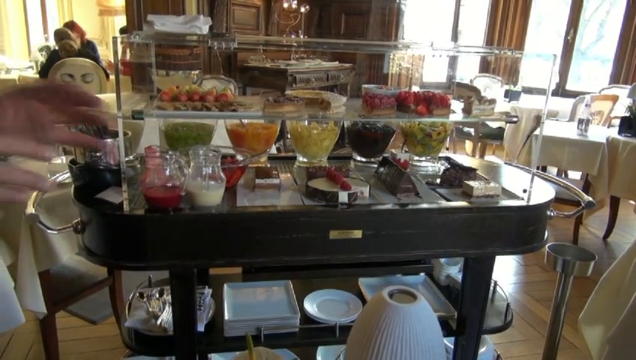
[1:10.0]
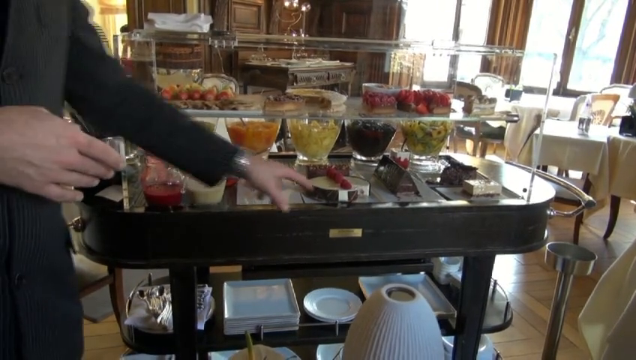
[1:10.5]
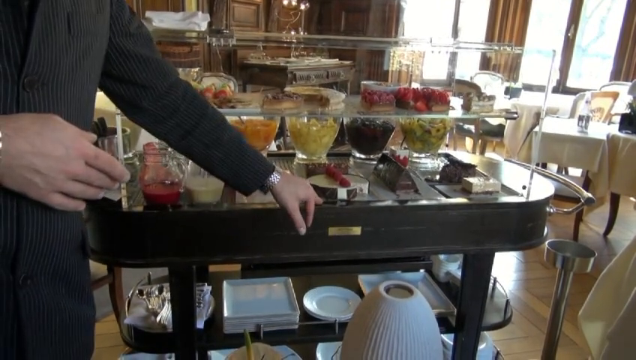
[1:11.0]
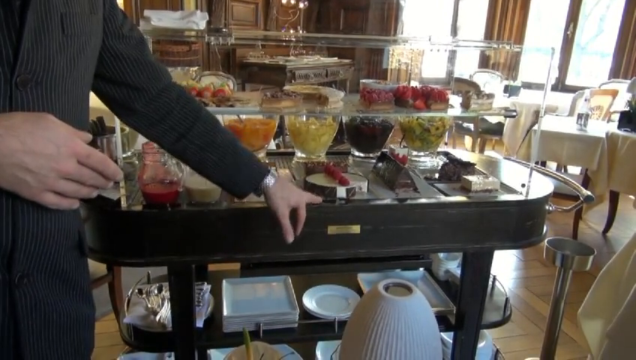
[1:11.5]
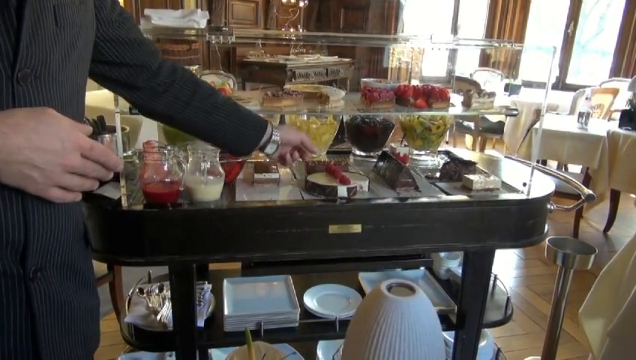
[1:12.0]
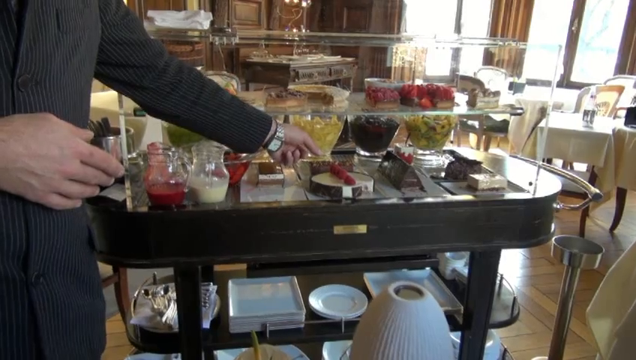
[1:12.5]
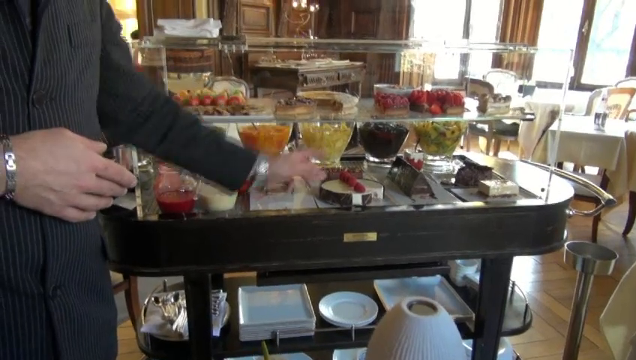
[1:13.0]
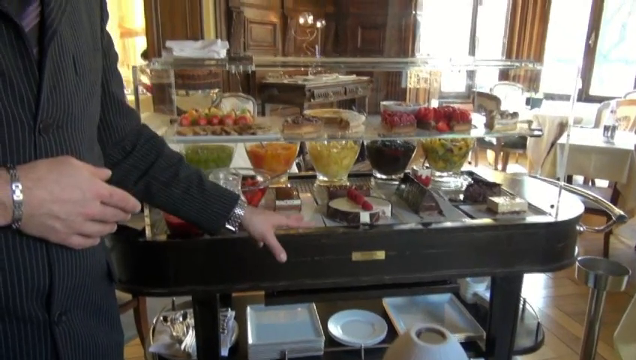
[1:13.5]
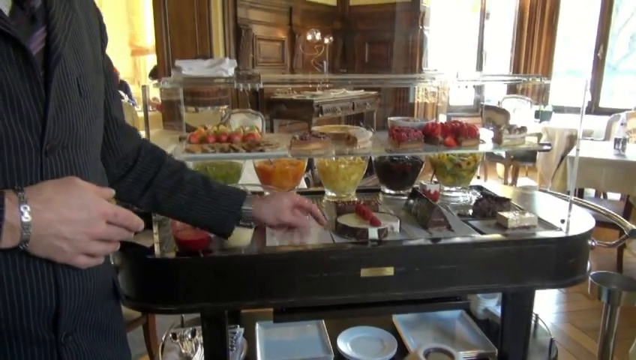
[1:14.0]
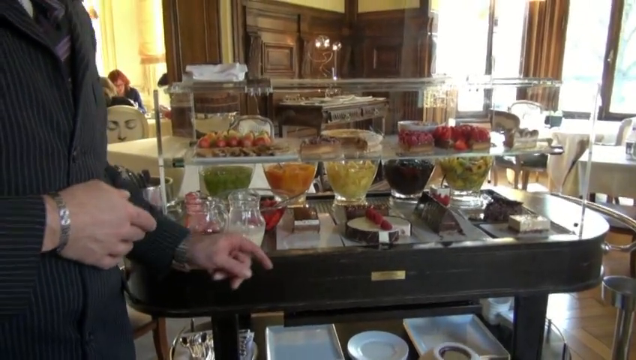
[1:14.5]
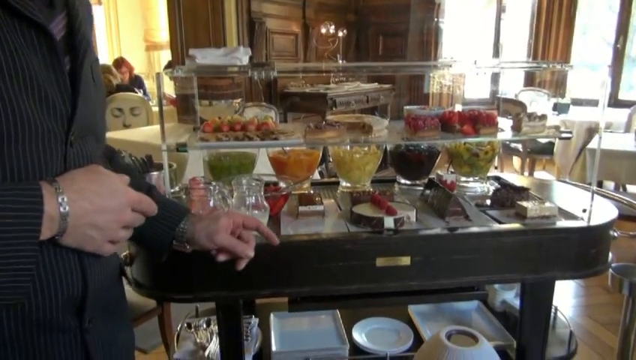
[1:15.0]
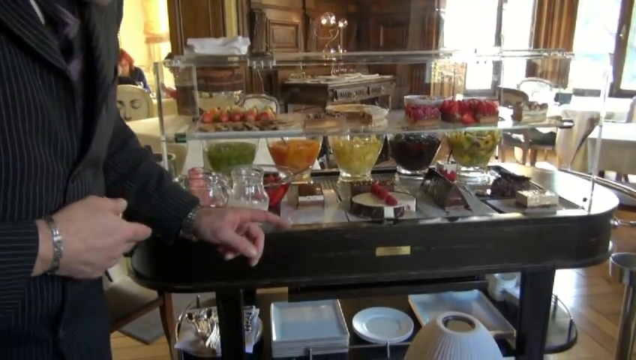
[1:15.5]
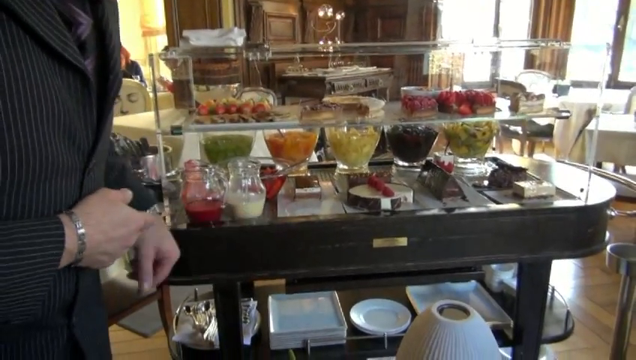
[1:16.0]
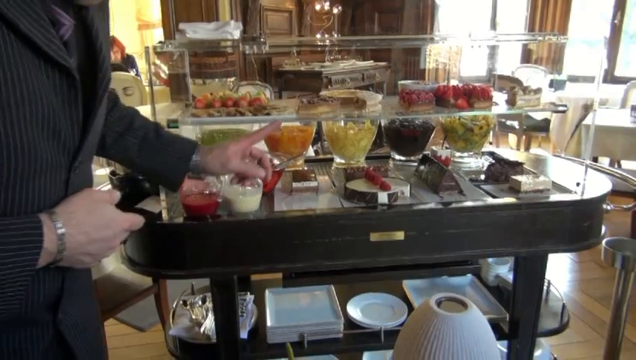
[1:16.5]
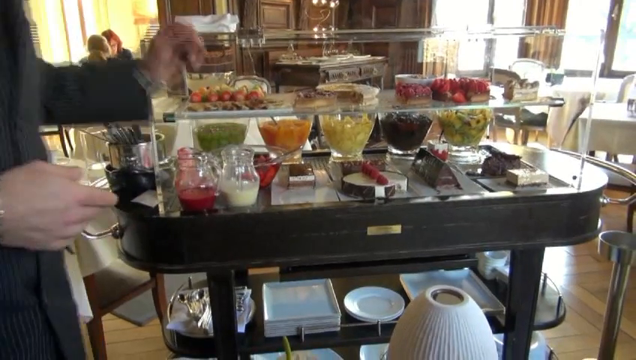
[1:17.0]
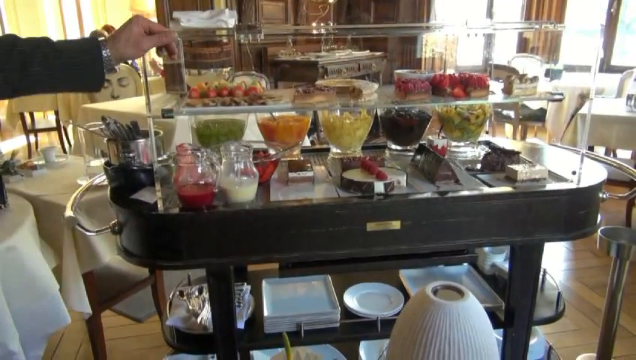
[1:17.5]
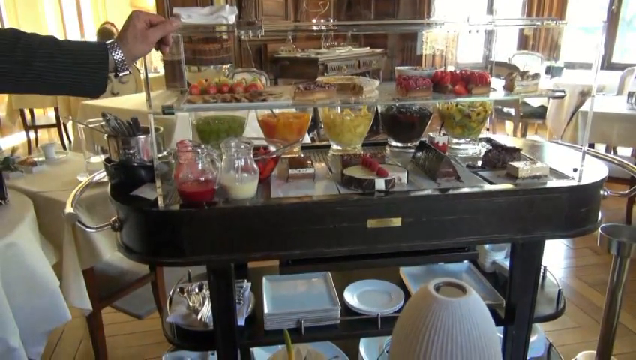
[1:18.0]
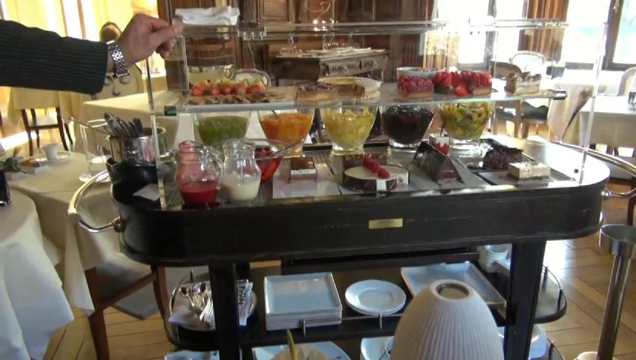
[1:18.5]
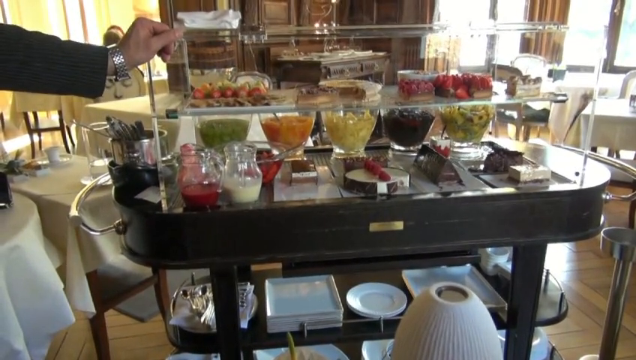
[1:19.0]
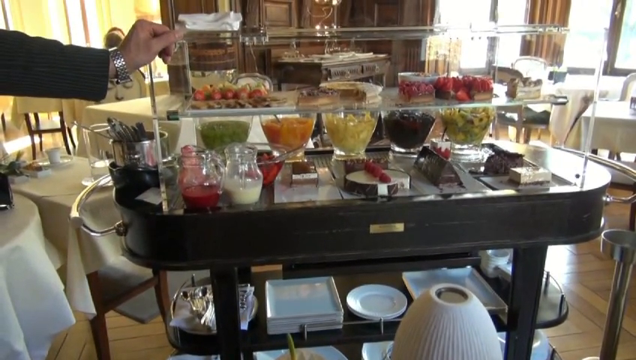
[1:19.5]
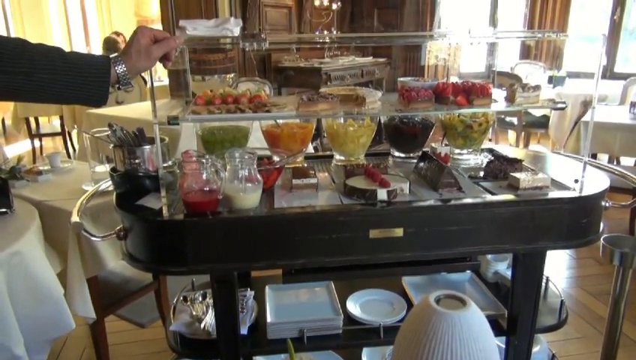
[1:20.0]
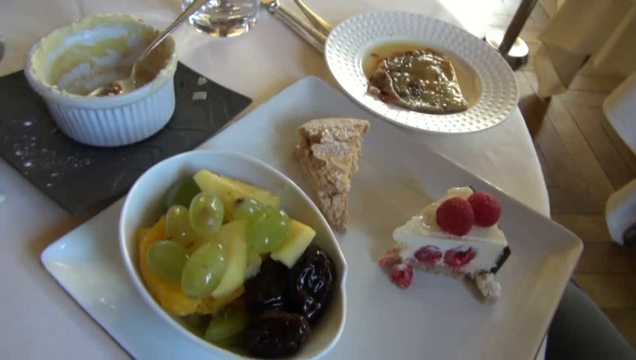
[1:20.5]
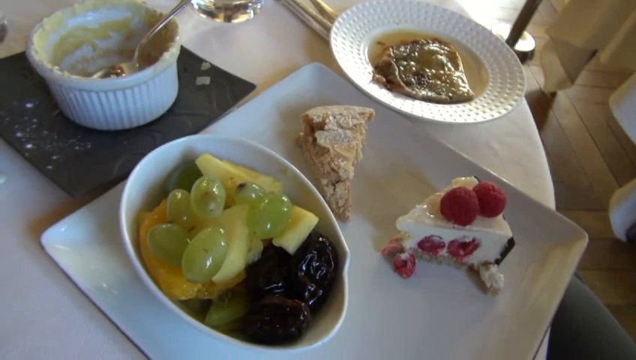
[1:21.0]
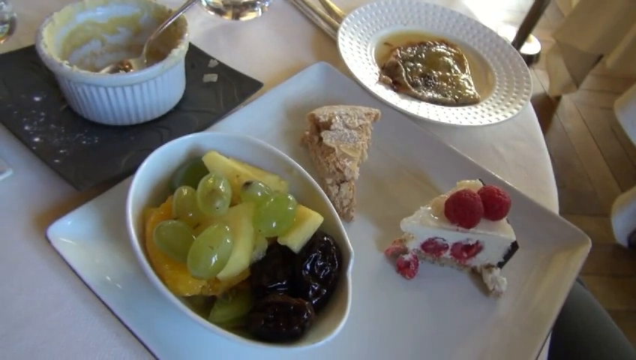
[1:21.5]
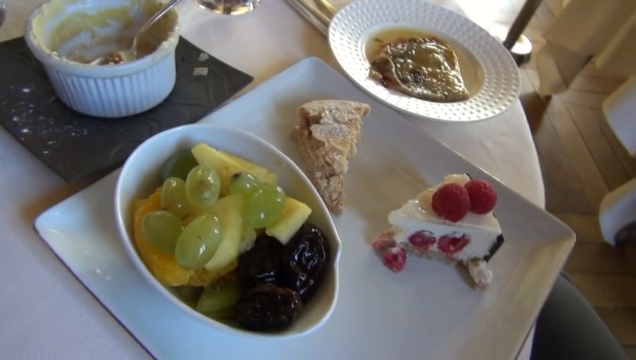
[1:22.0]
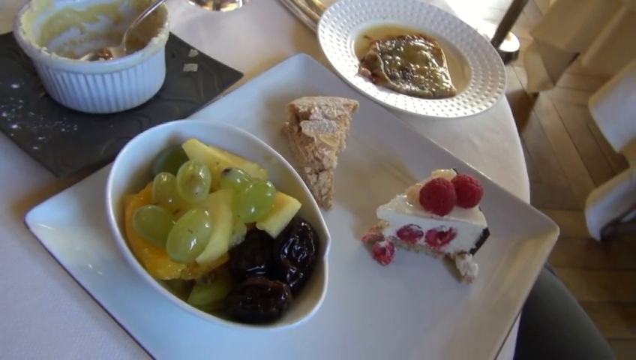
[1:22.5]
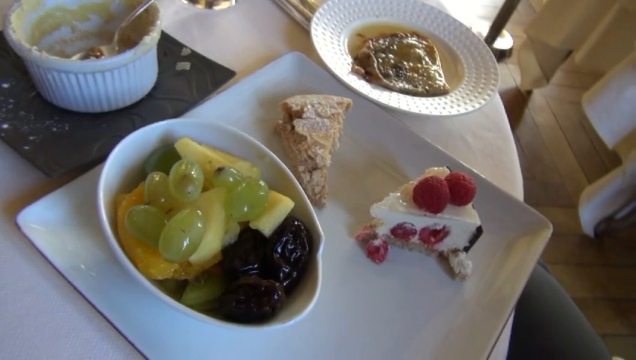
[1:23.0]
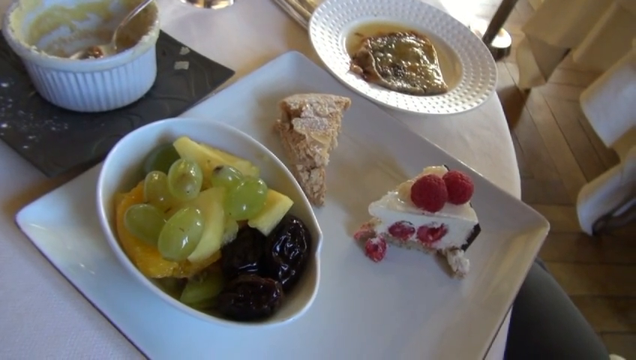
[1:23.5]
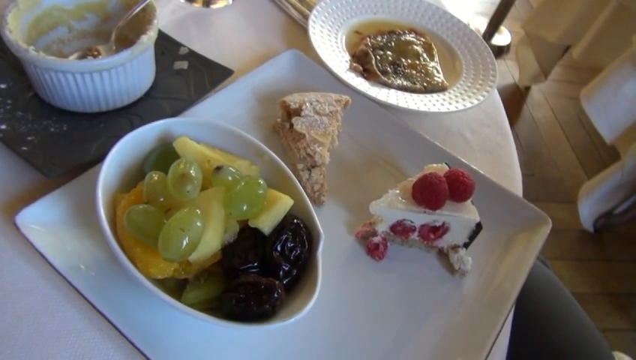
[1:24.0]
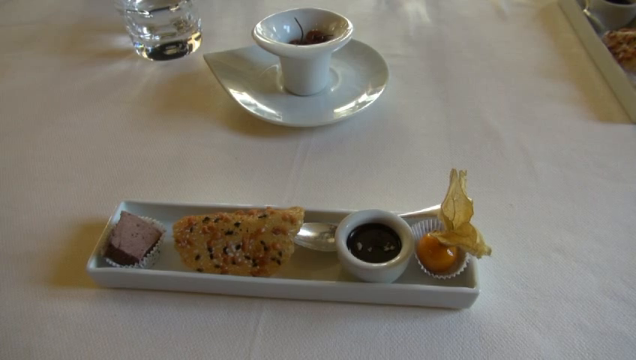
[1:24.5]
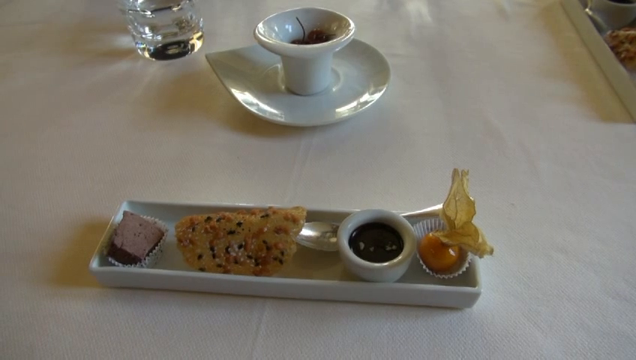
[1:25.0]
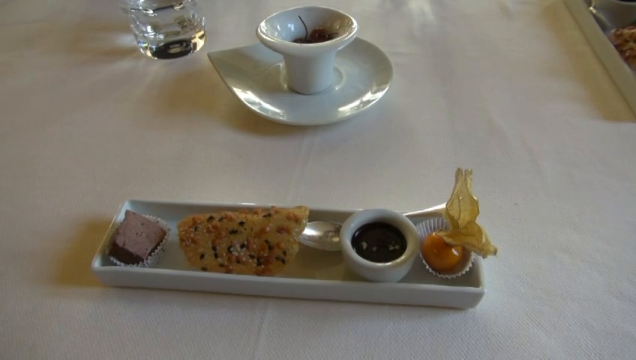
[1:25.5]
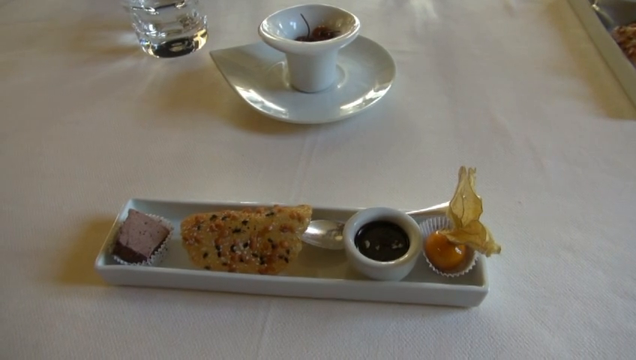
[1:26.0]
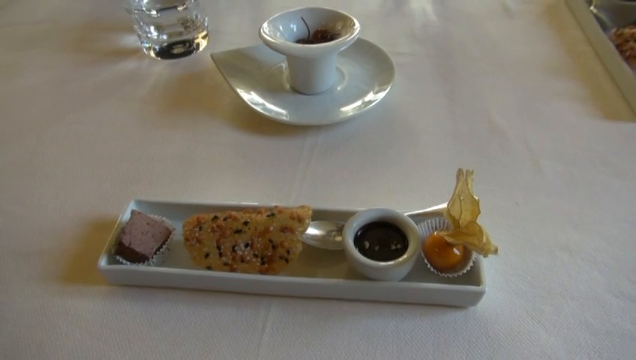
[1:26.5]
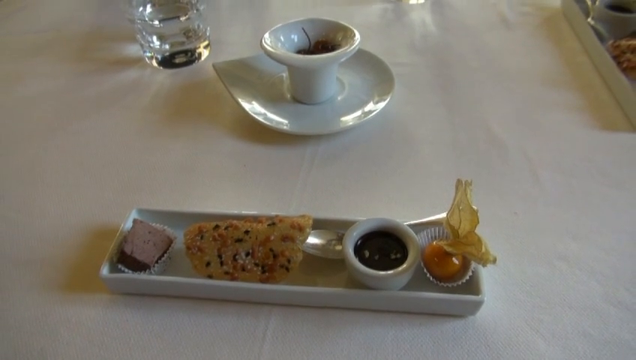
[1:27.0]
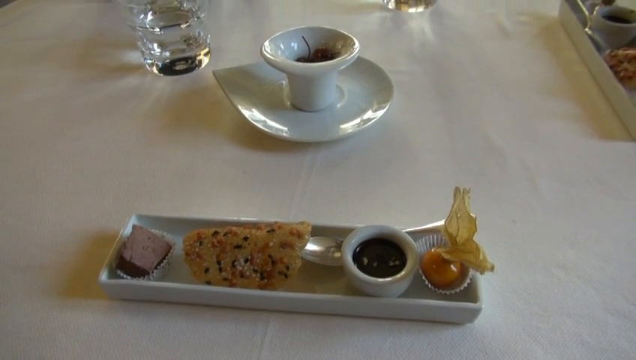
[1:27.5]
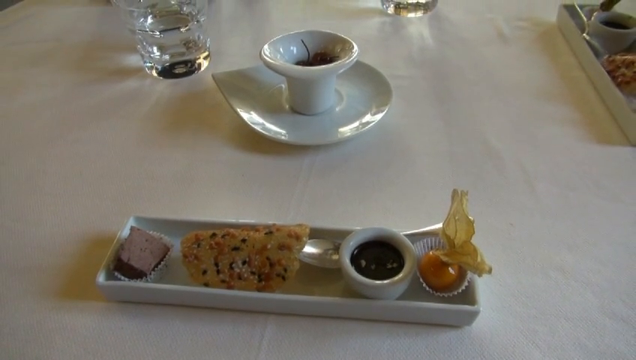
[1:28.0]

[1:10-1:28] The man is still there, his tie visible, pointing at different items: fruits in different colors, some green, some yellow and some red. The video then cuts to another shot in which someone seems to have picked up a snack, and he points out different desserts and treats. Next comes what the person is eating: maybe banana pudding, yellow, in a small bowl with a spoon in it and a smudge on the side. There is a square plate and an oval bowl, with grapes, what look like raisins, pineapples, and something orange that may be mandarin orange, peach or something else. There is some type of baked treat that looks like maybe a scone or a slice of one, and what appears to be cheesecake with raspberries in it.